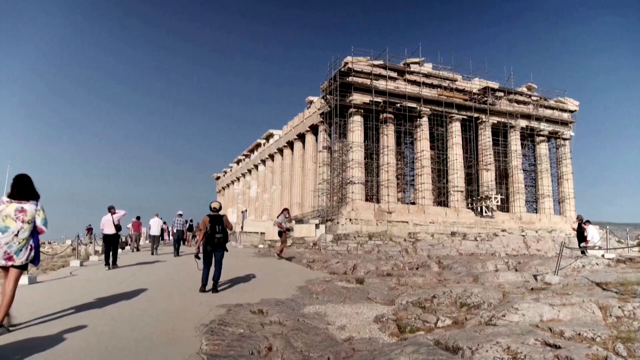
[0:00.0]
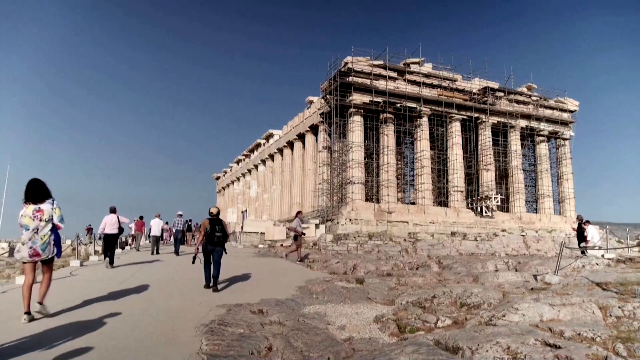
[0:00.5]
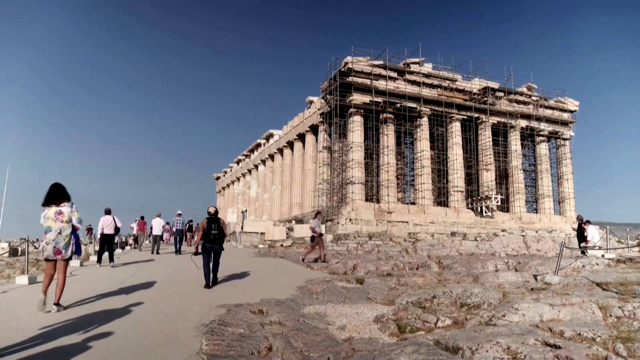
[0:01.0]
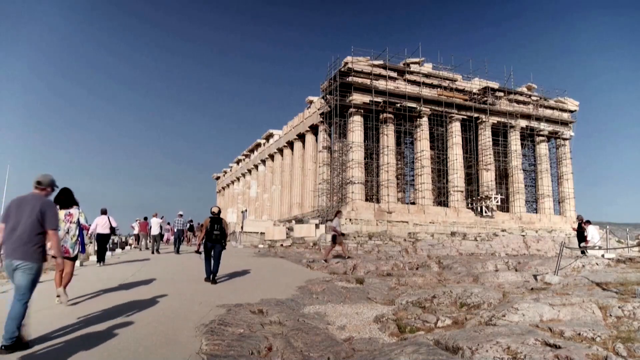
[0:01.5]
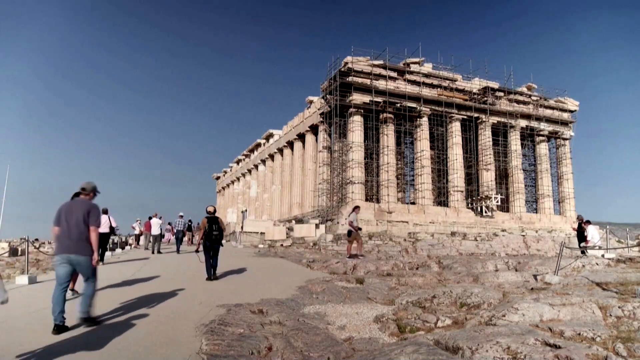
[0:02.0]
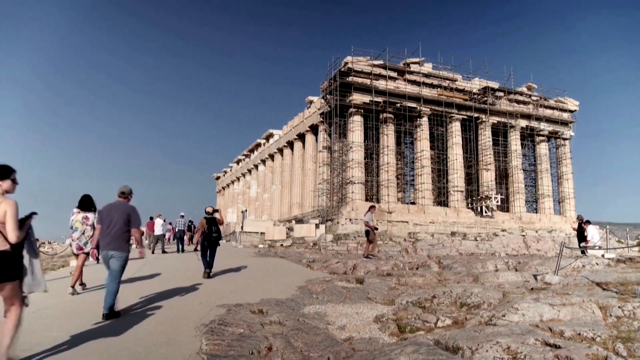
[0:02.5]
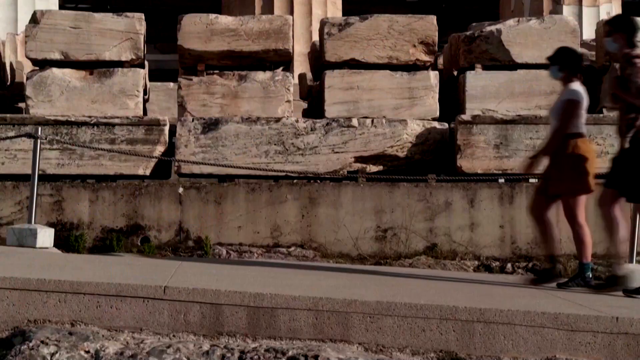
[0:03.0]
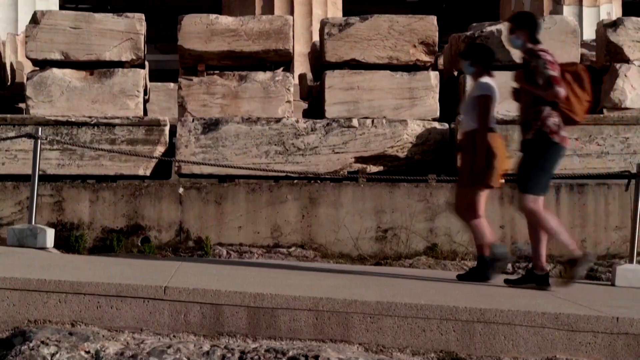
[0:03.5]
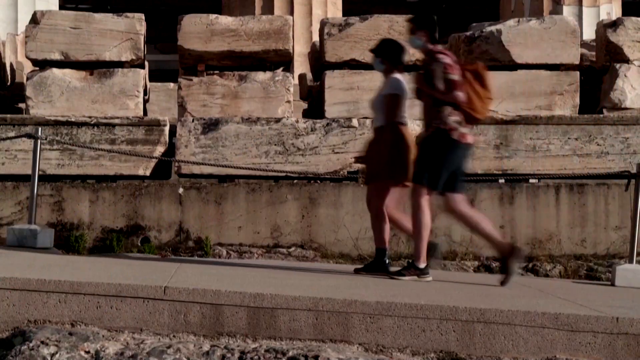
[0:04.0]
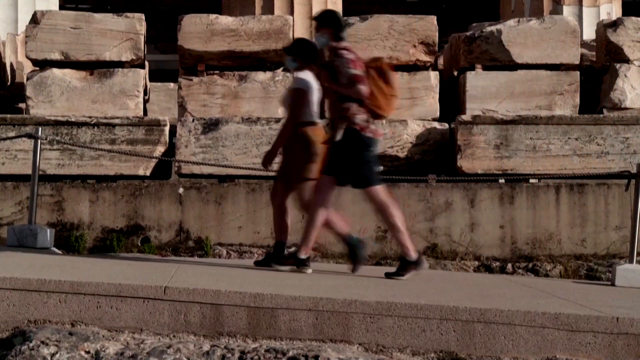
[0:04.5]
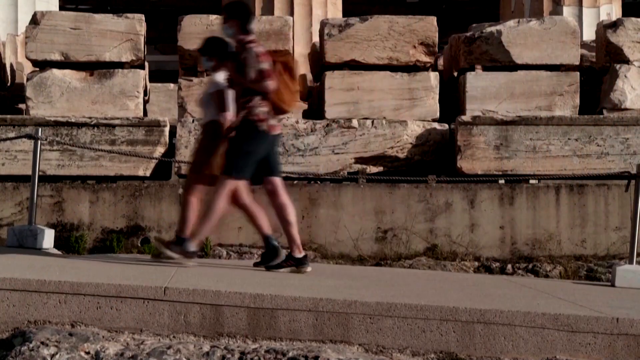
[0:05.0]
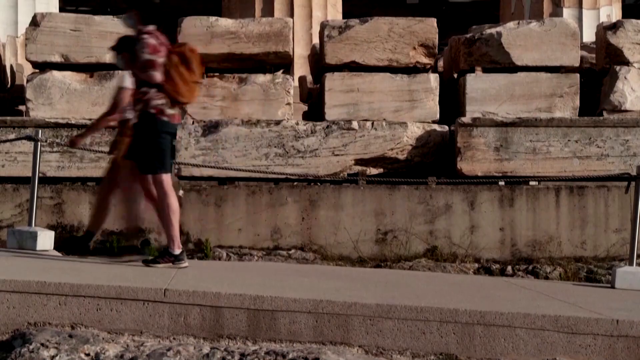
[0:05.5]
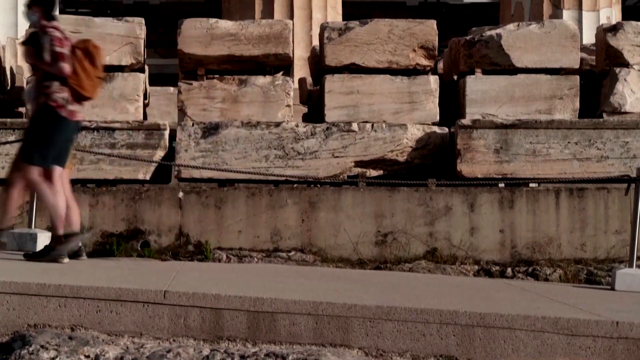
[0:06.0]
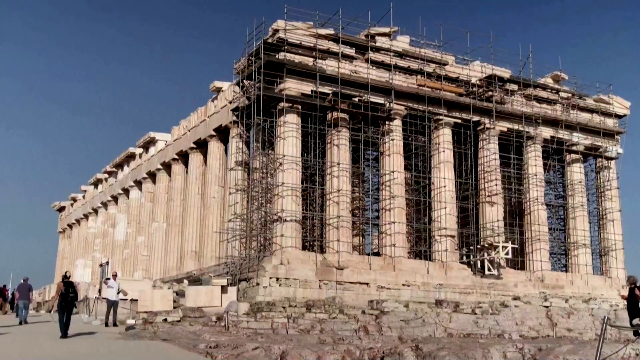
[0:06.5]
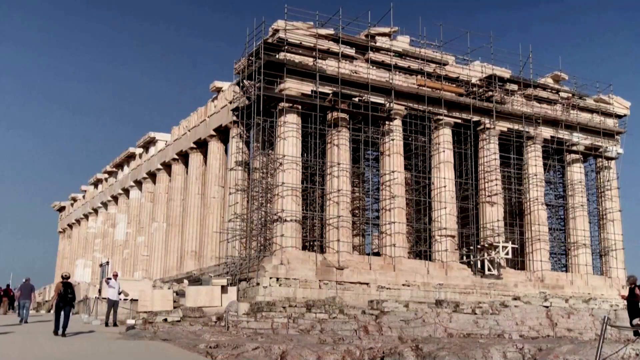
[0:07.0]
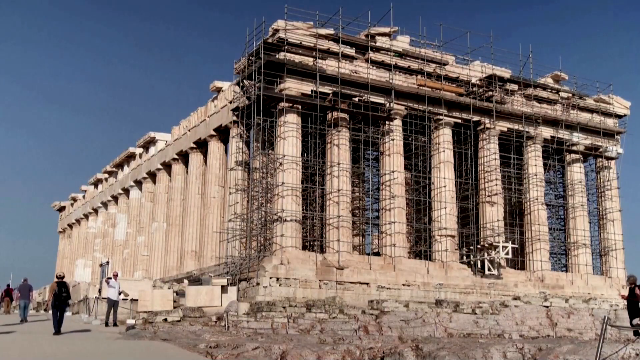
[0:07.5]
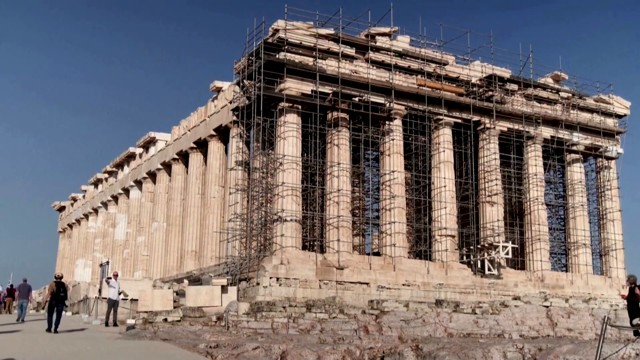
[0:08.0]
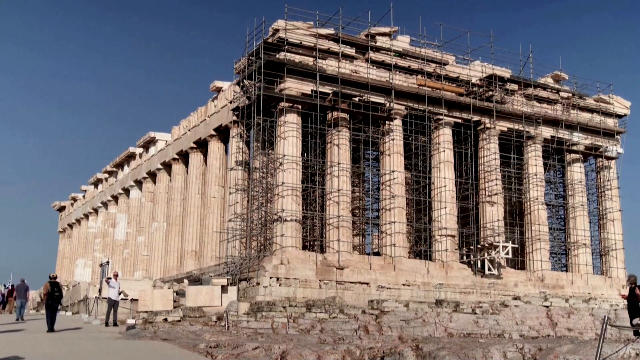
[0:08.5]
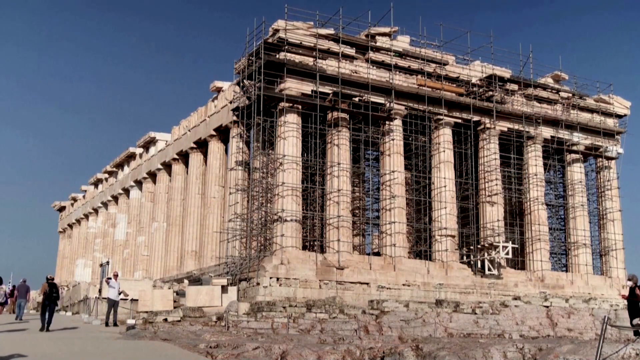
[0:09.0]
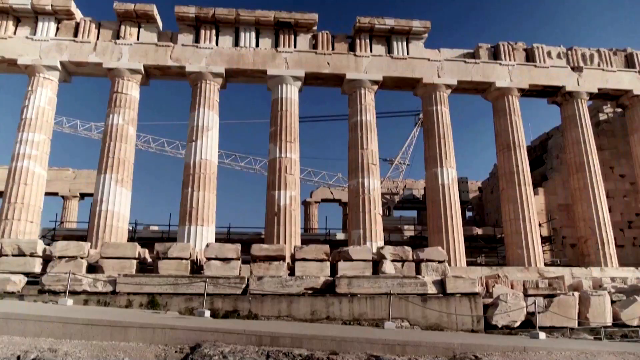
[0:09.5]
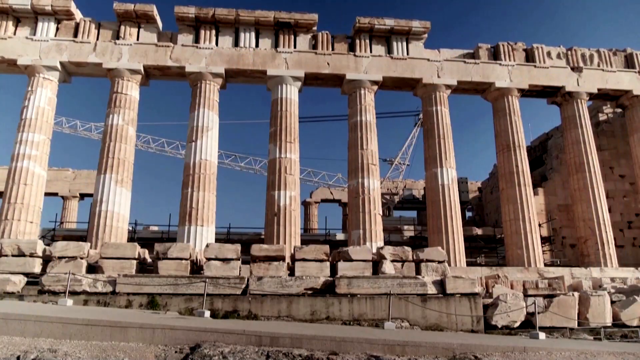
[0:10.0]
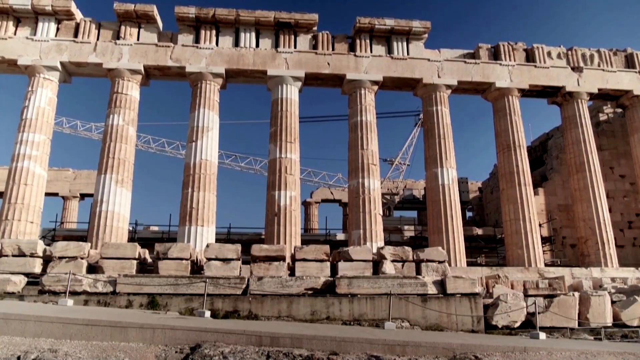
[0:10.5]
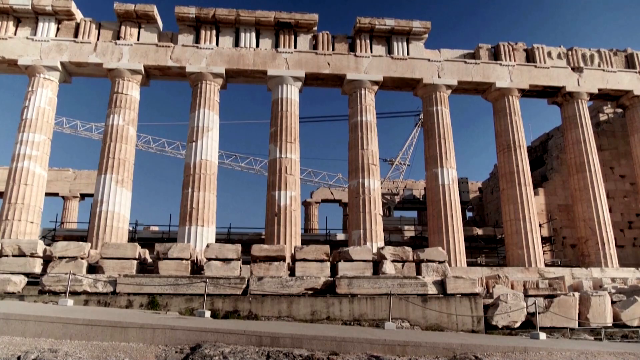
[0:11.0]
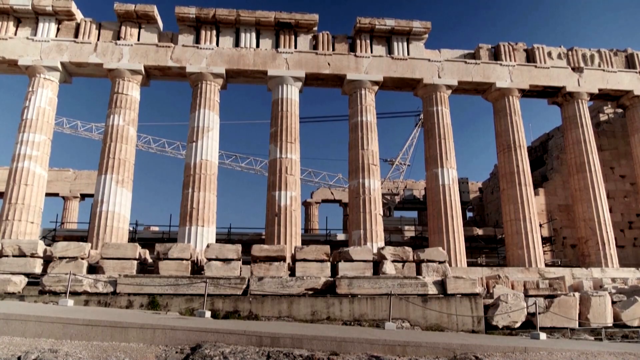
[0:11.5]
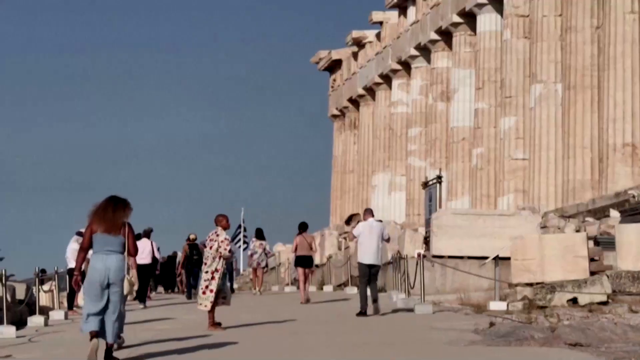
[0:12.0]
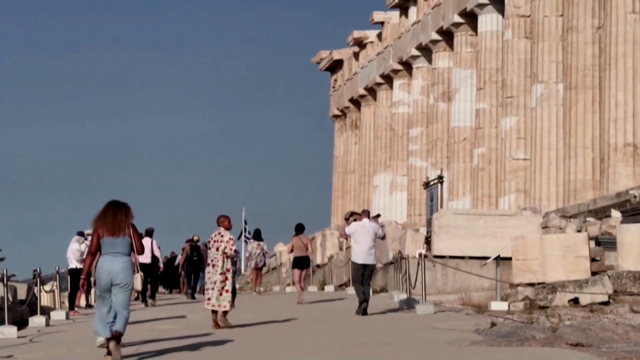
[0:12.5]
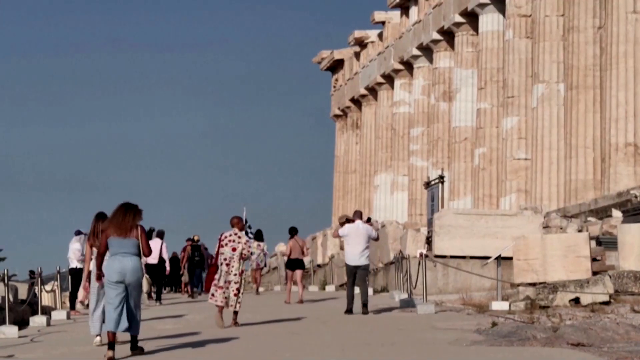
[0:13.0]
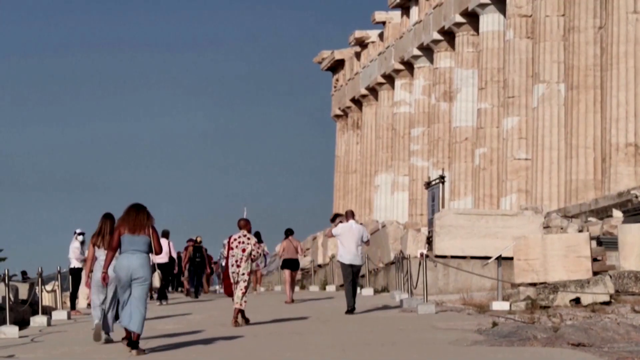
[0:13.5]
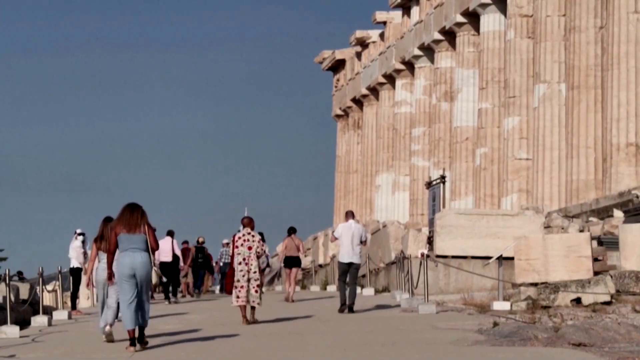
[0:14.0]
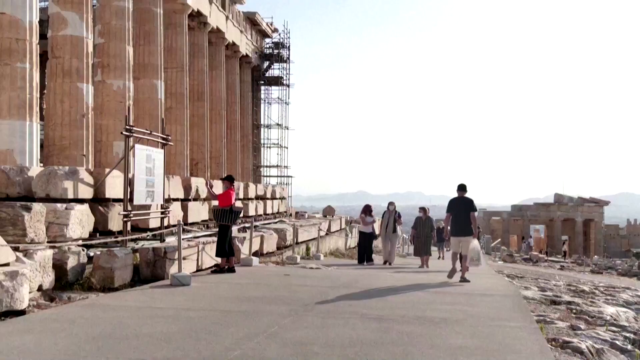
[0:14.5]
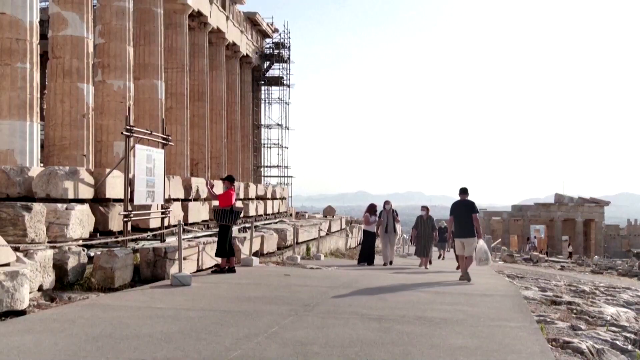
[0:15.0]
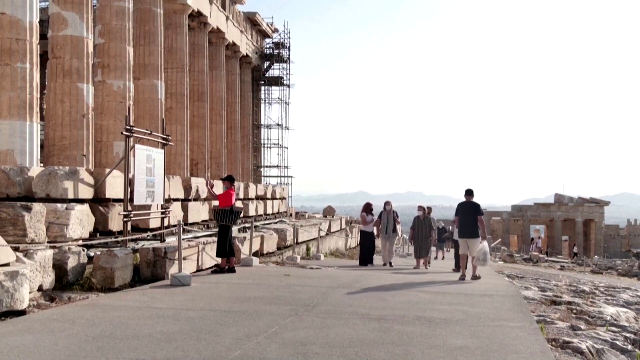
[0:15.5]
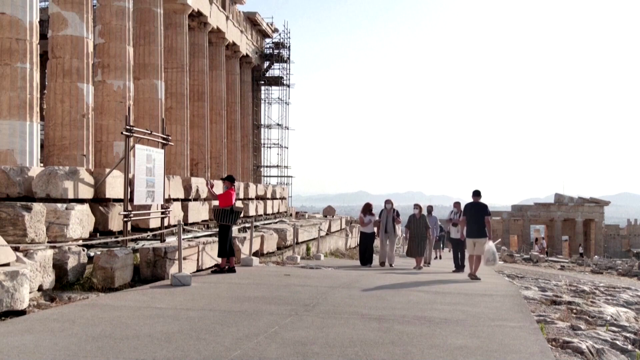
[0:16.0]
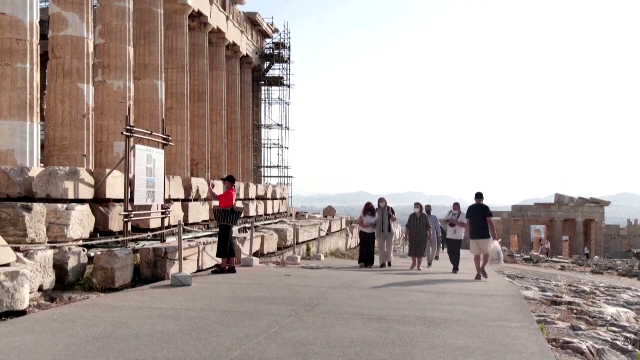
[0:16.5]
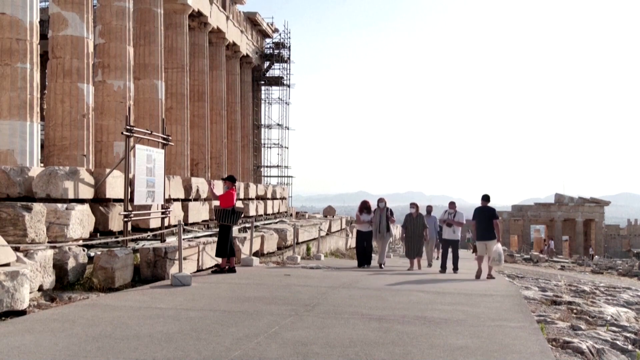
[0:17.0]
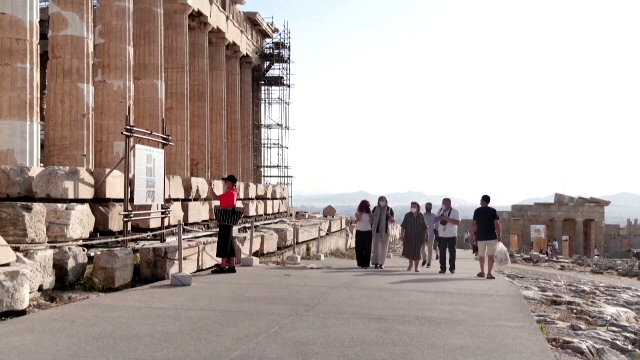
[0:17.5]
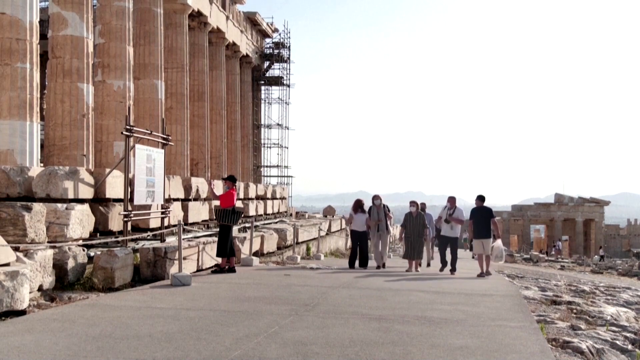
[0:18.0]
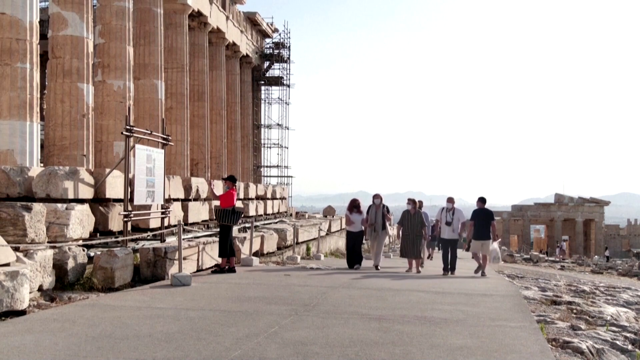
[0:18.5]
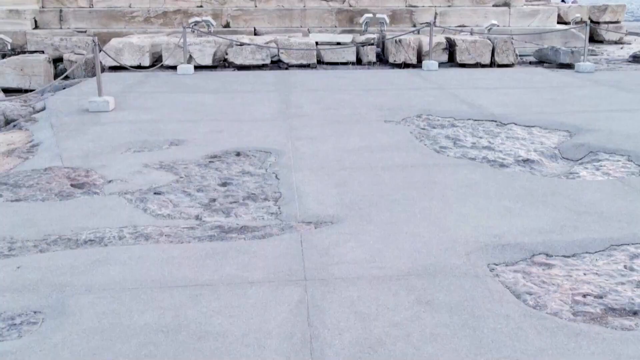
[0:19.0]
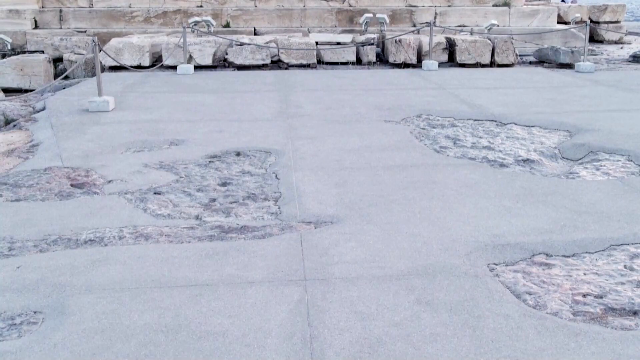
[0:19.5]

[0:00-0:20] The setting is an ancient city of some kind, possibly Rome, and construction appears to be under way, possibly by a crew trying to rebuild portions of the ancient architecture. Metal scaffolding covers one entire set of columns, and there are cranes. Tourists and possibly citizens walk by in different casual outfits: some in shorts, some in pants, most in short sleeves. The fabric of some people's clothing moves slightly in a breeze. Many people wear backpacks, and many of them appear to be tourists walking through to view the ruins, the architecture and the site itself. The granite floor shows cracks, with widening gaps and spacing between some of the large stone bricks.